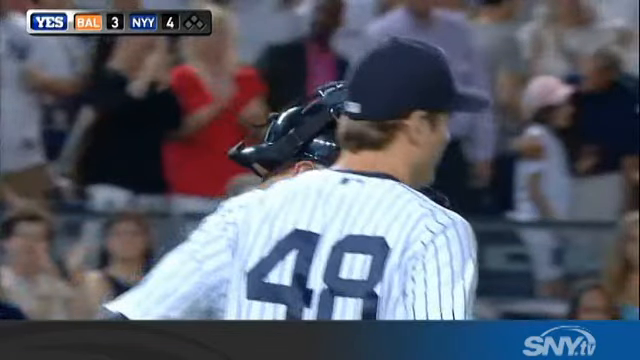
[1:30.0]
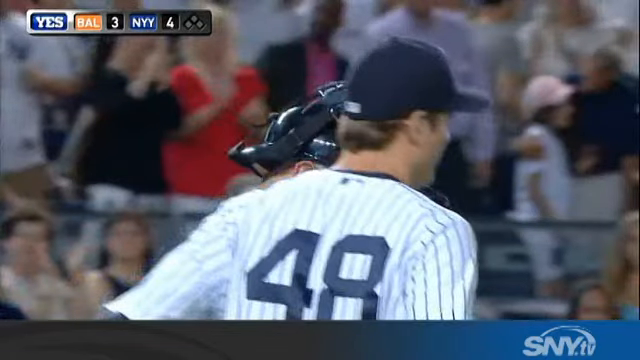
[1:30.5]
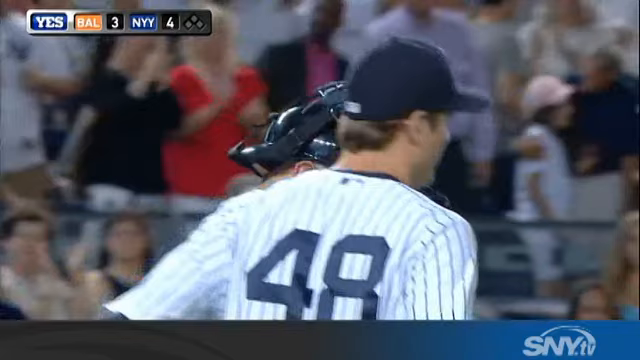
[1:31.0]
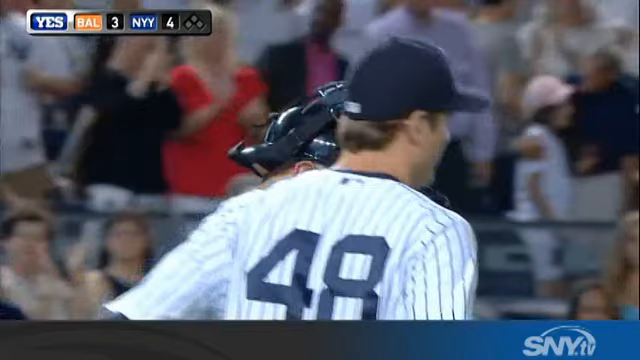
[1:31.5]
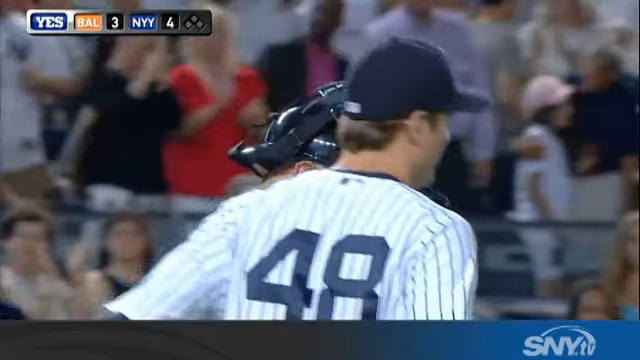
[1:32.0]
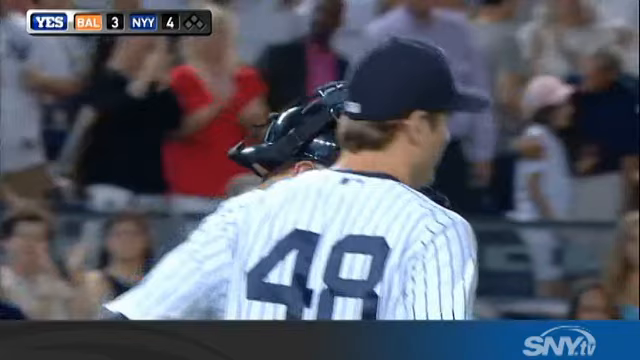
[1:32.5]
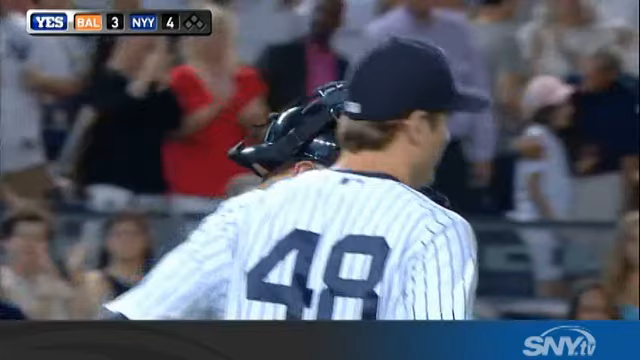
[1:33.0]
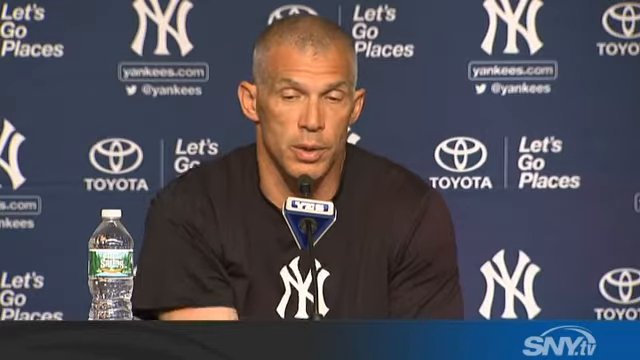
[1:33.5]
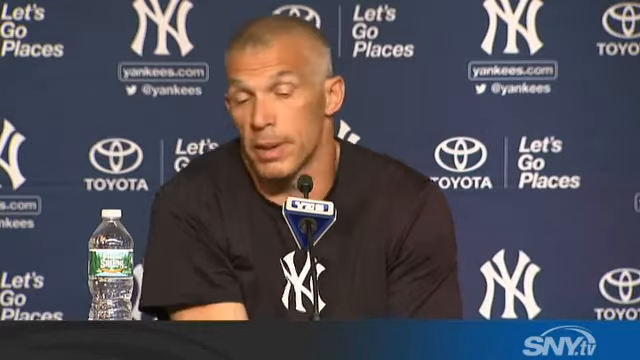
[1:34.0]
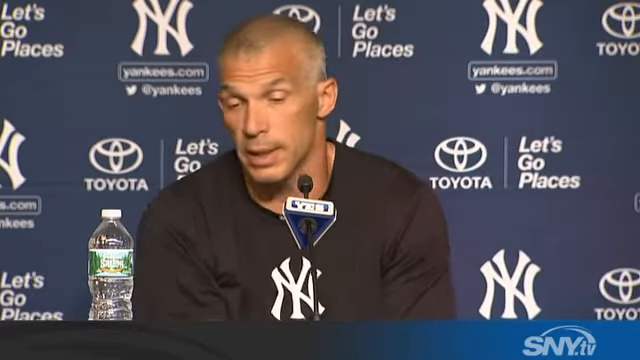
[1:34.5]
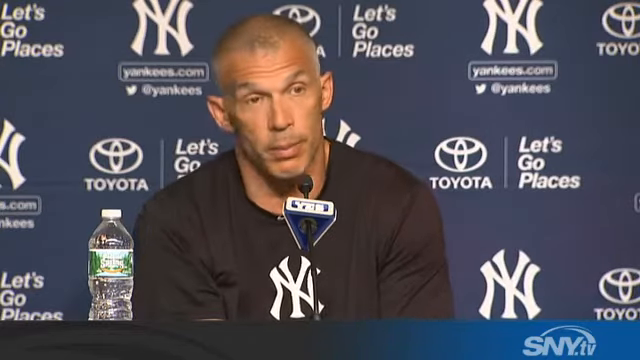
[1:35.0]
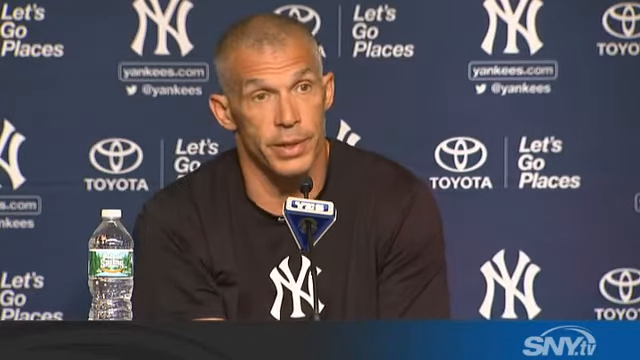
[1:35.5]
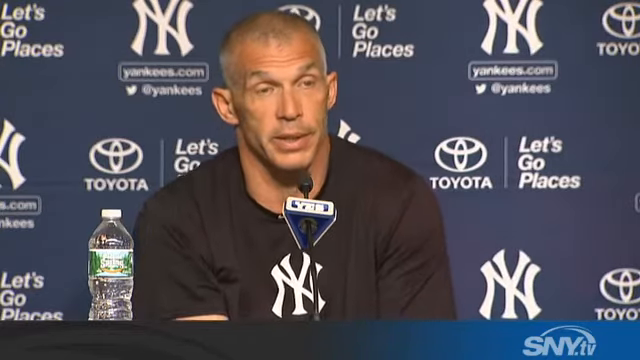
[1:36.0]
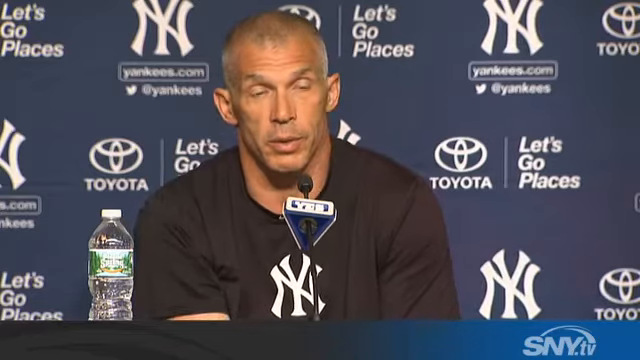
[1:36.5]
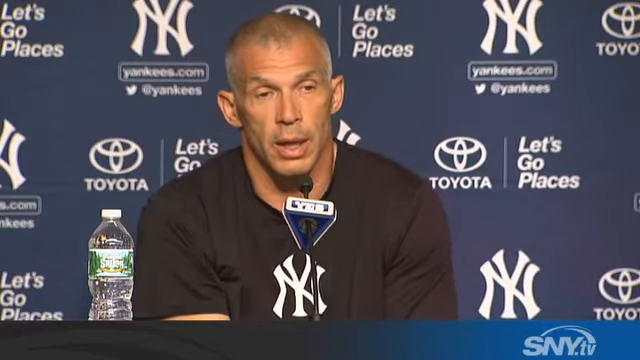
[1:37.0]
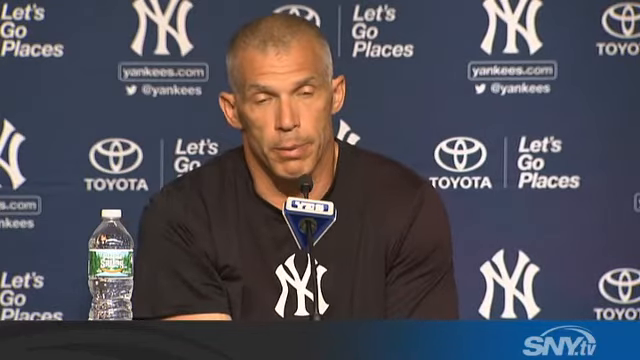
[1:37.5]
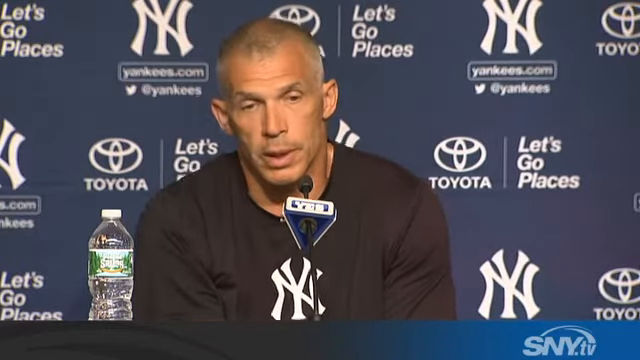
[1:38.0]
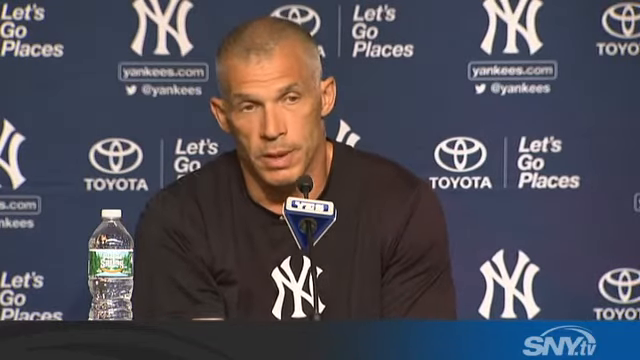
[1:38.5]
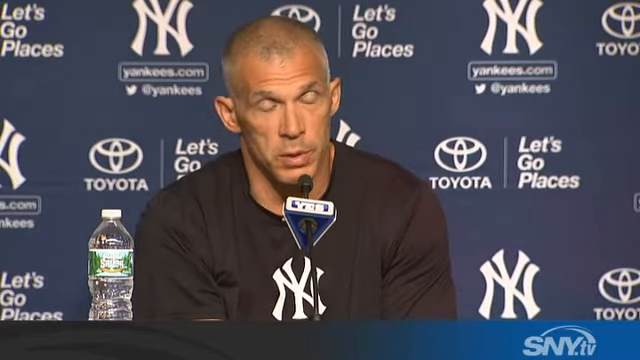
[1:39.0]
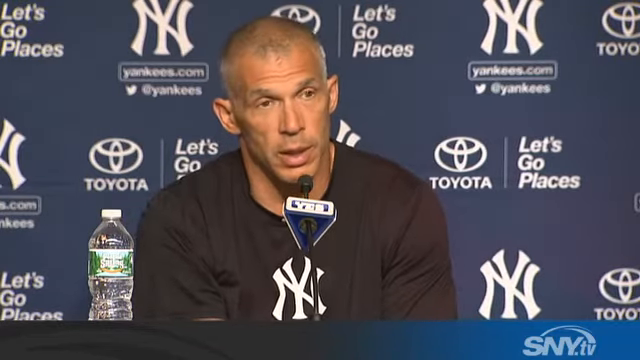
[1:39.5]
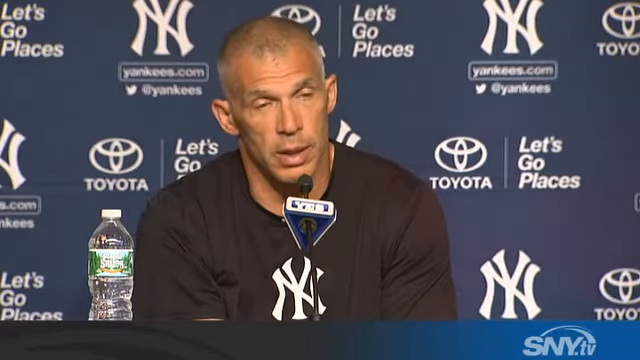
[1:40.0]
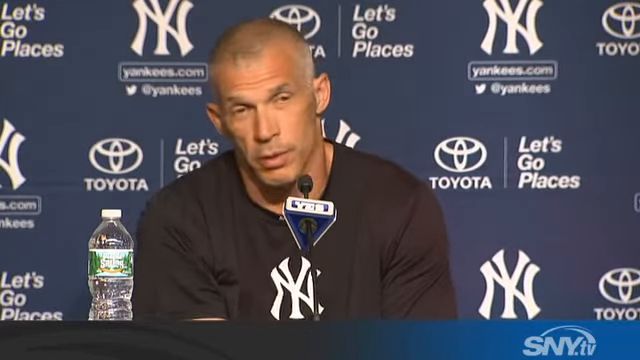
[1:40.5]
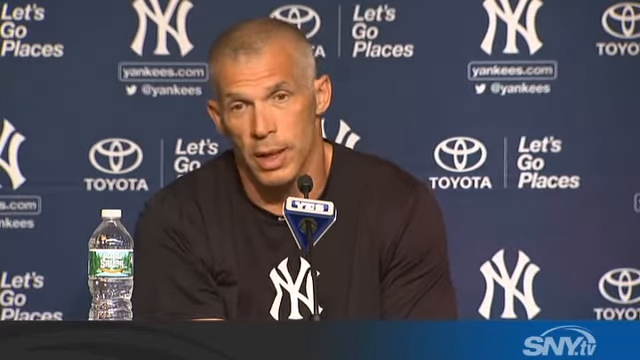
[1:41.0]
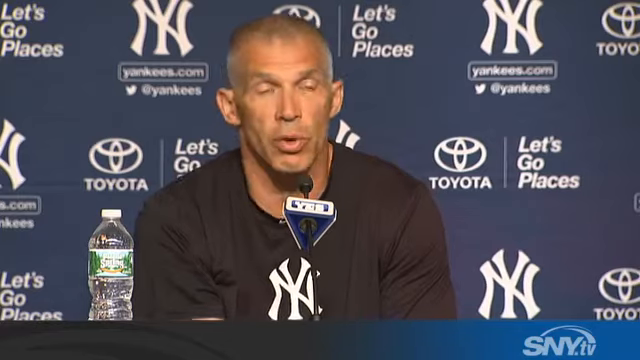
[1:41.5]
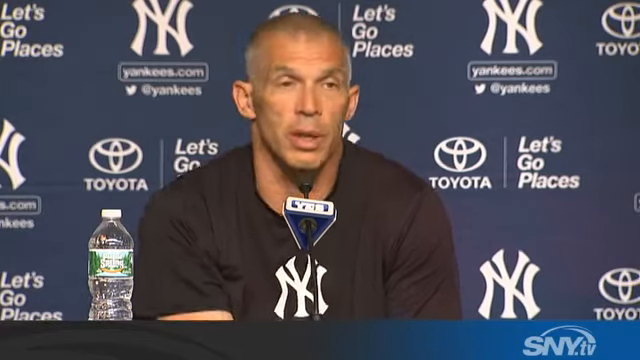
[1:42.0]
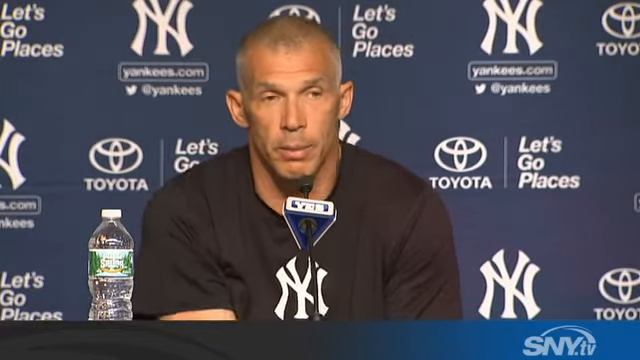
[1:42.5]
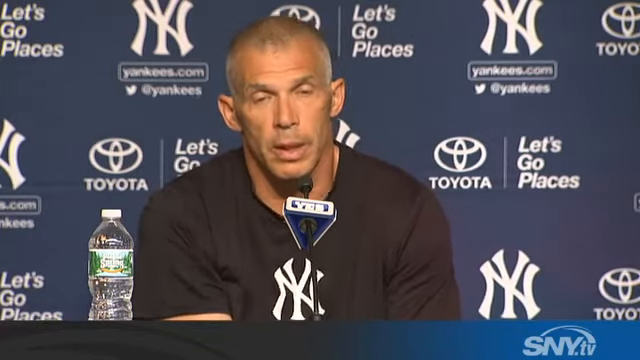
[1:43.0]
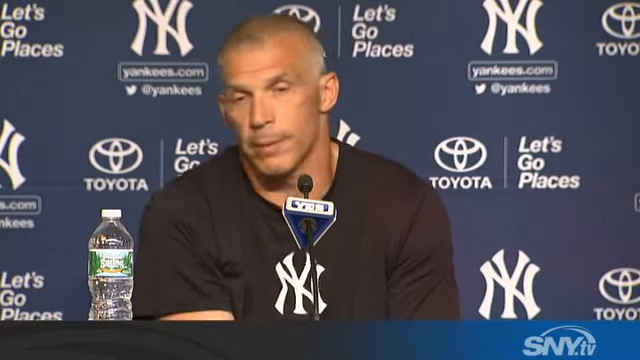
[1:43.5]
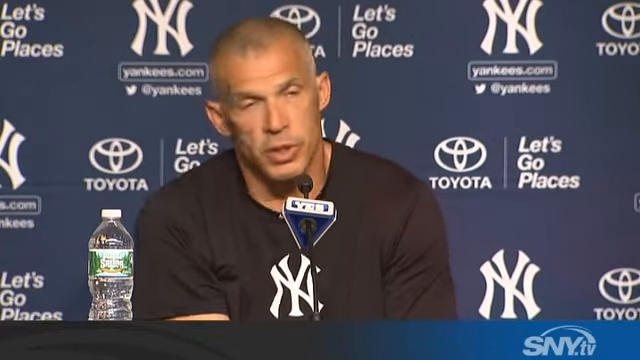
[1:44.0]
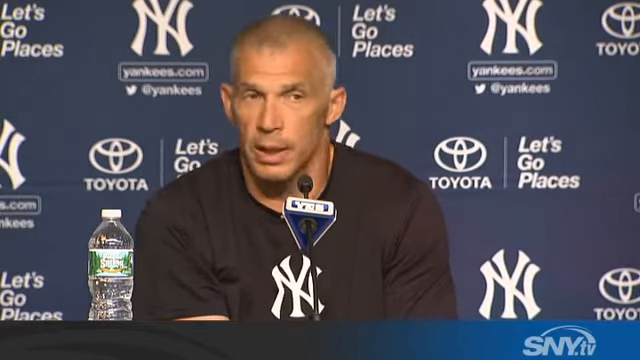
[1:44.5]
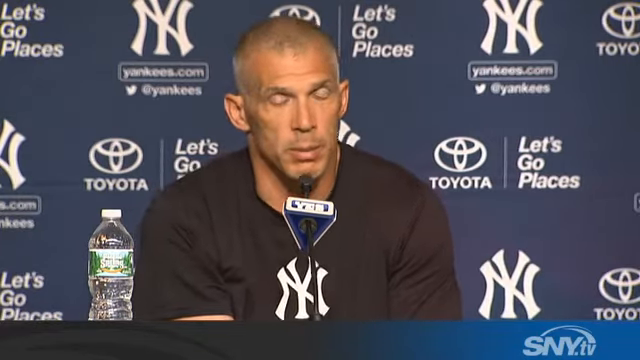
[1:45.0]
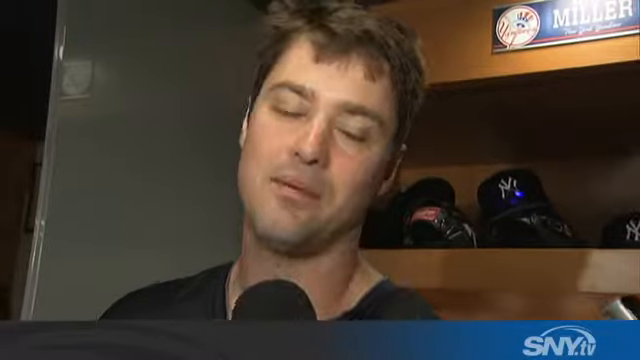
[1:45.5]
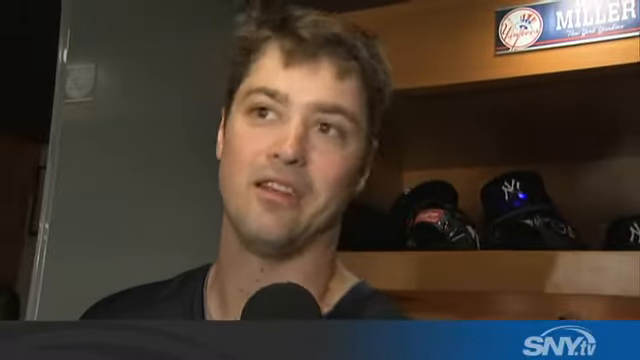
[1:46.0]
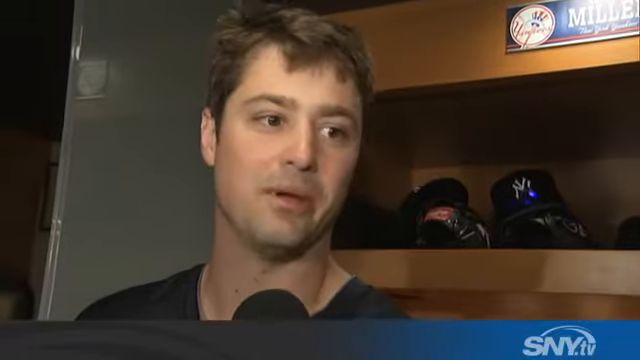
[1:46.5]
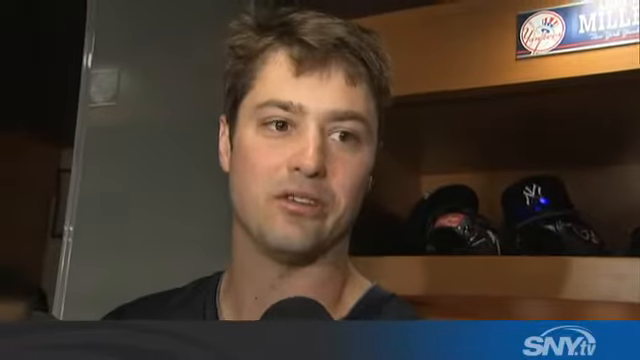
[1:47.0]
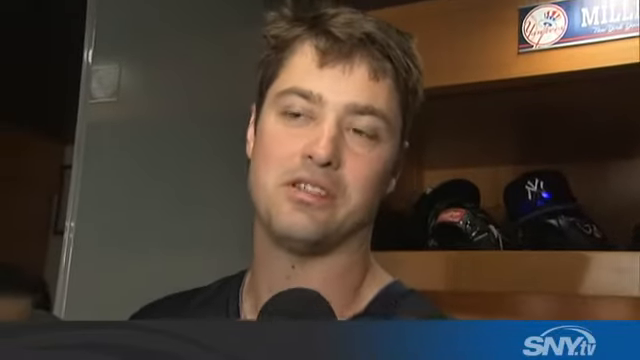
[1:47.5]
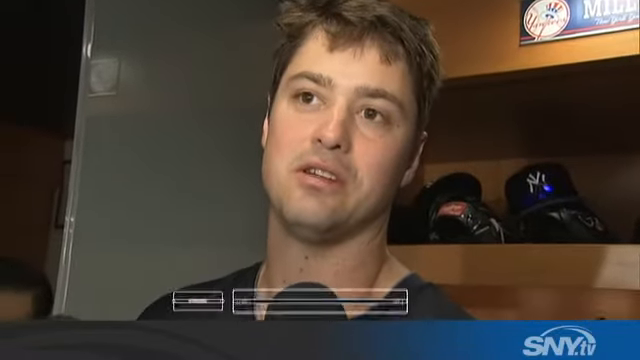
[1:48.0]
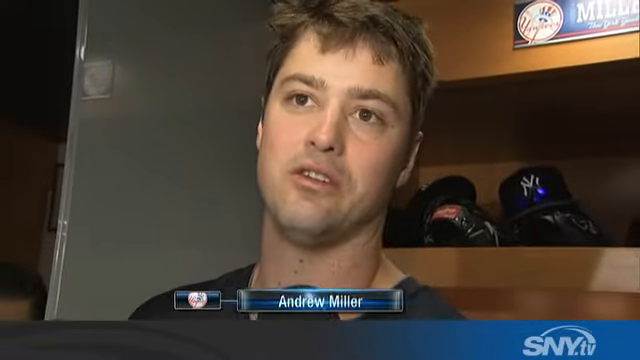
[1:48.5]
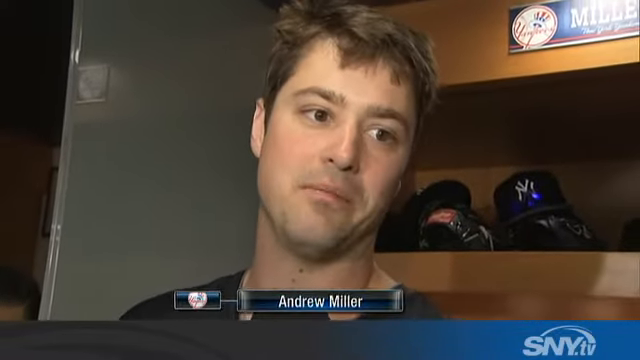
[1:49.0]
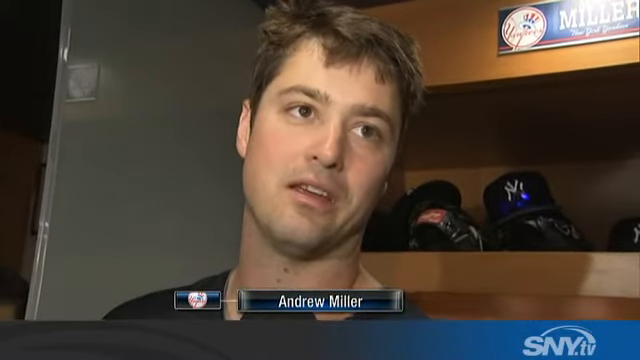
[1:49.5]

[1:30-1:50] A YES Channel graphic in capital letters "YES" appears, starting with the teams: "BAL," possibly Baltimore, and "NYY" for the New York Yankees. An image shows the number 48 on the Yankees team. Then one of the other men who was talking earlier, neither Mark nor Alex Rodriguez, is at a post-game conference, sitting down, unlike the other two, who were standing up during their interviews. A Poland Spring bottle is on the right side of the screen, to his left, and he is talking. Then another player, Andrew Miller, appears.